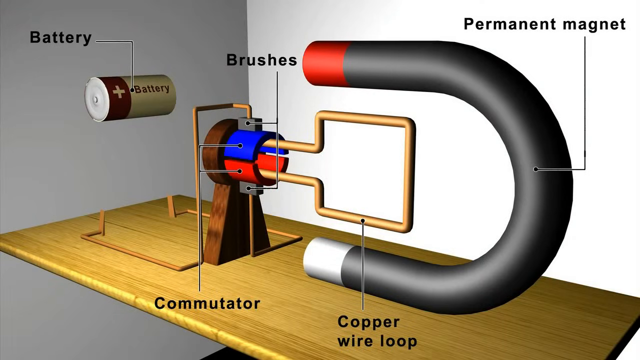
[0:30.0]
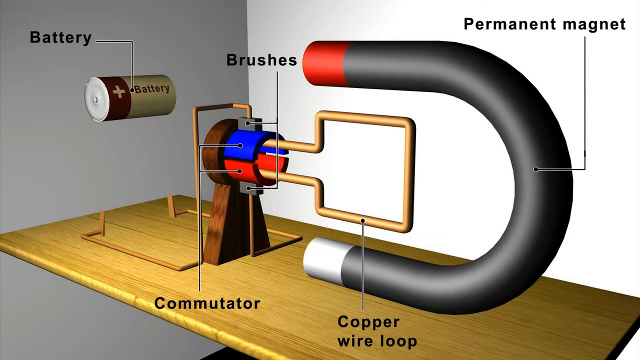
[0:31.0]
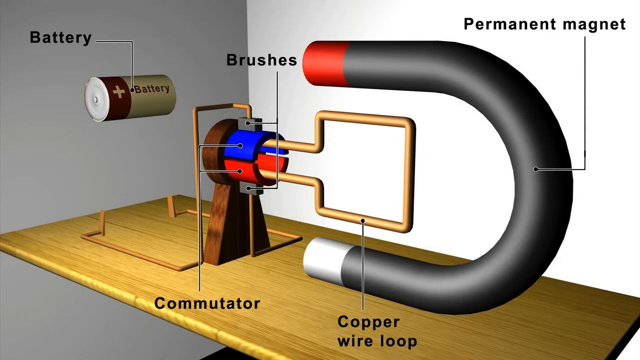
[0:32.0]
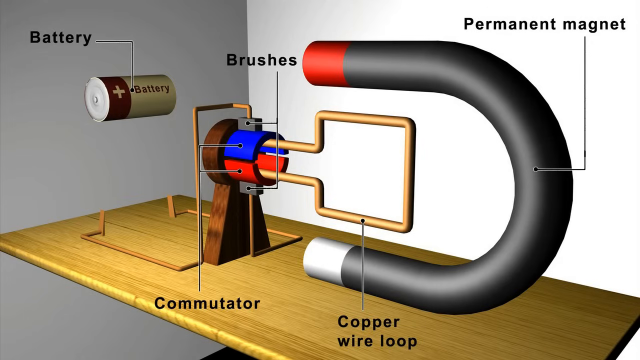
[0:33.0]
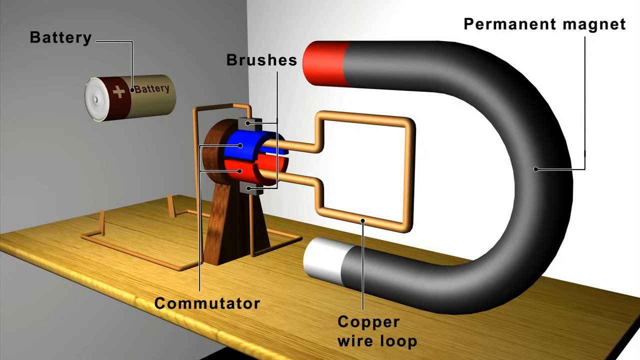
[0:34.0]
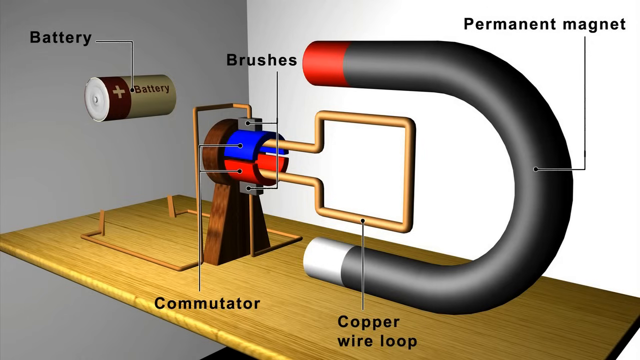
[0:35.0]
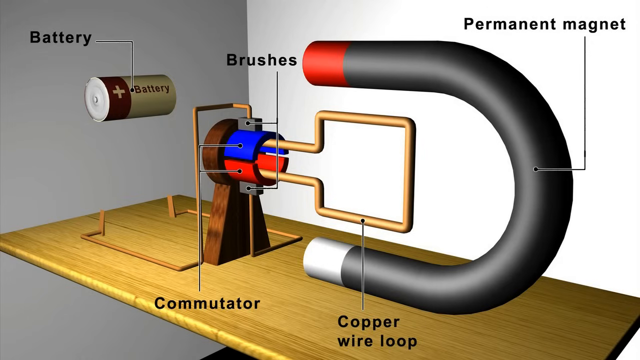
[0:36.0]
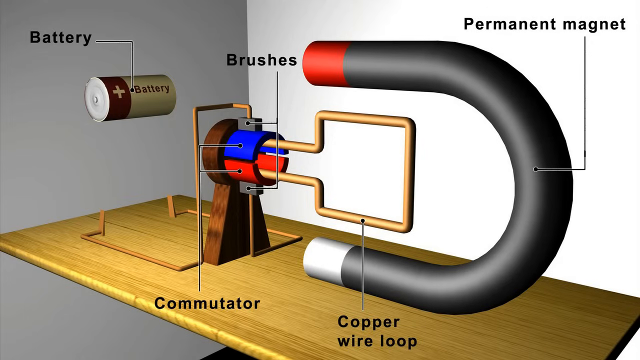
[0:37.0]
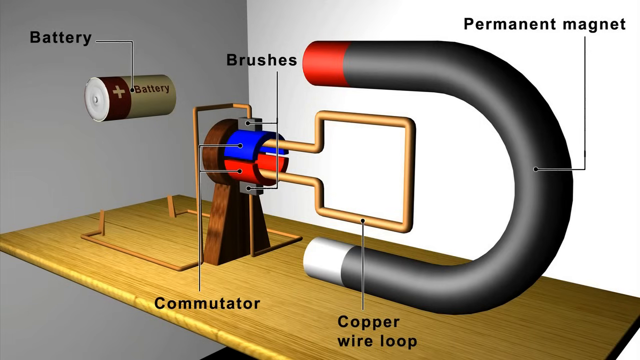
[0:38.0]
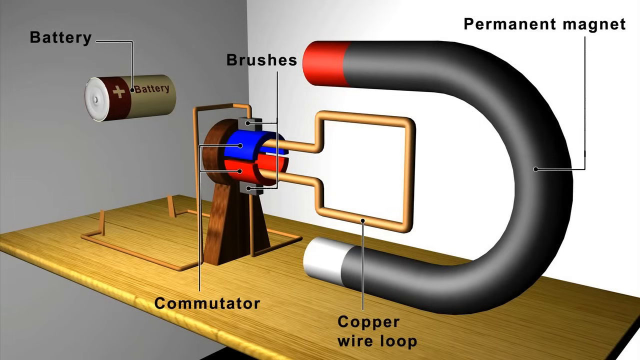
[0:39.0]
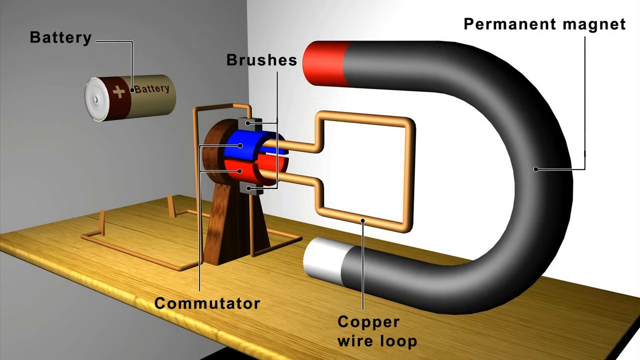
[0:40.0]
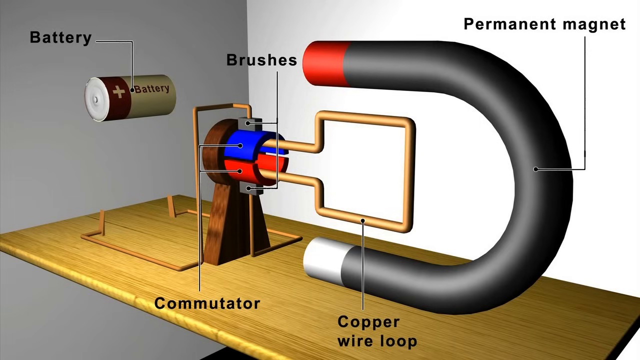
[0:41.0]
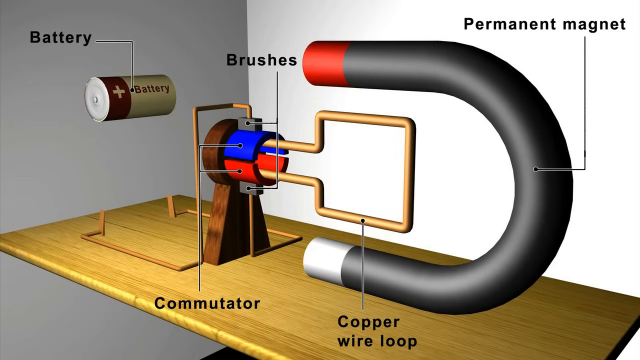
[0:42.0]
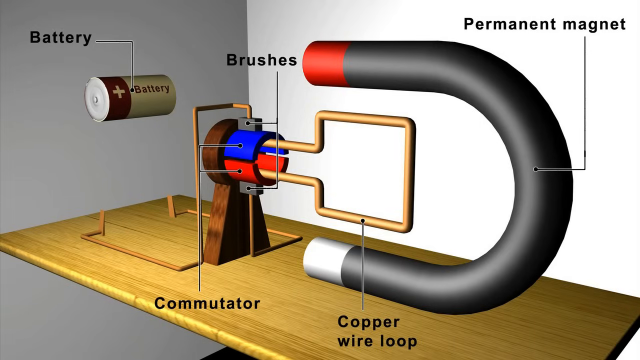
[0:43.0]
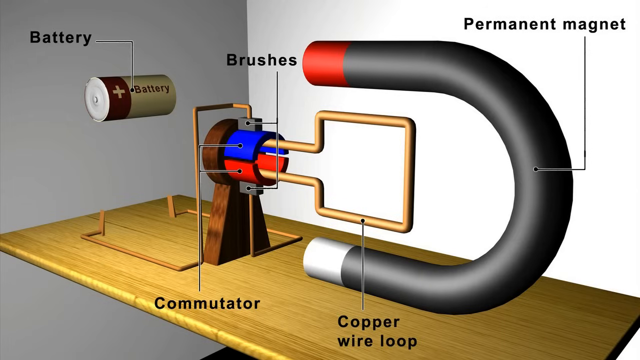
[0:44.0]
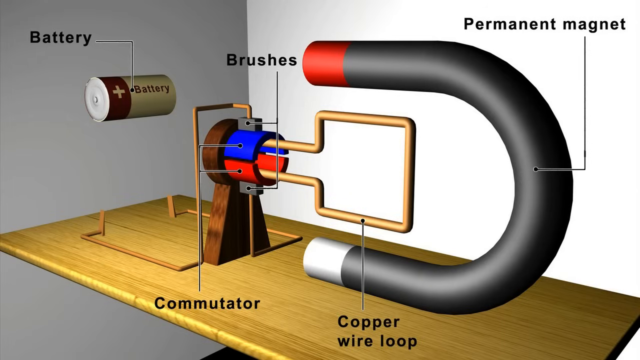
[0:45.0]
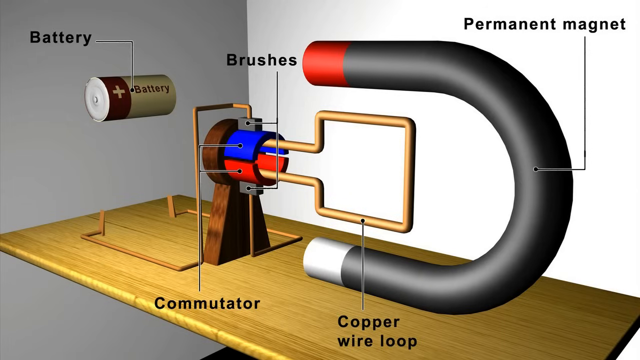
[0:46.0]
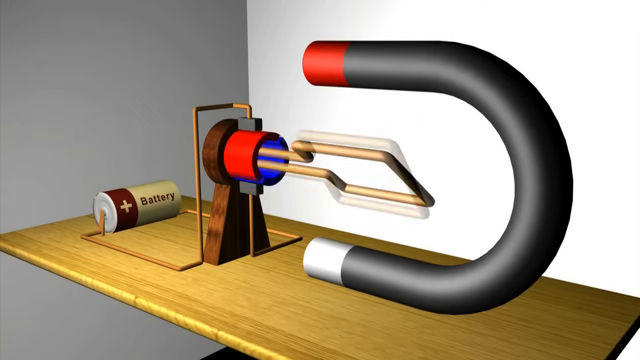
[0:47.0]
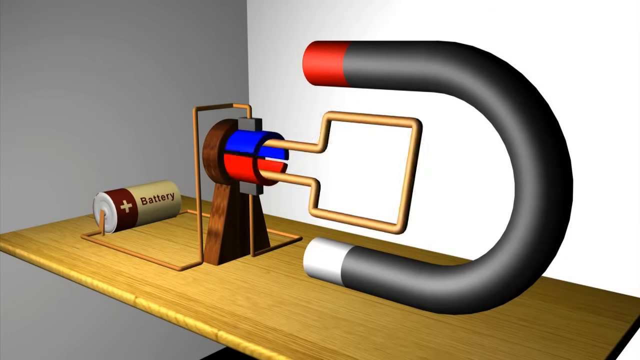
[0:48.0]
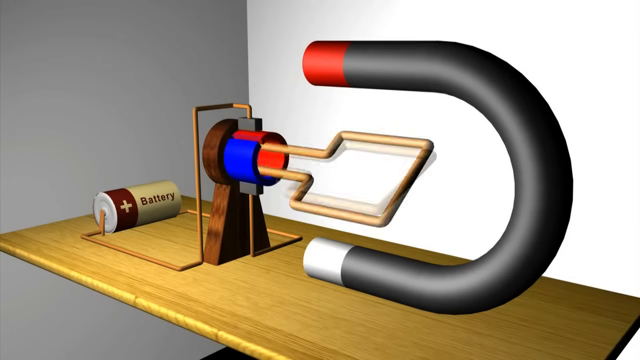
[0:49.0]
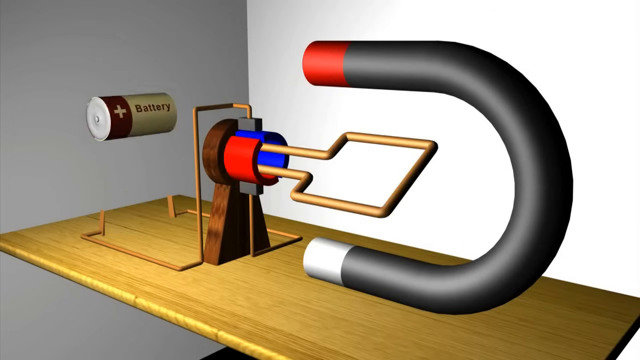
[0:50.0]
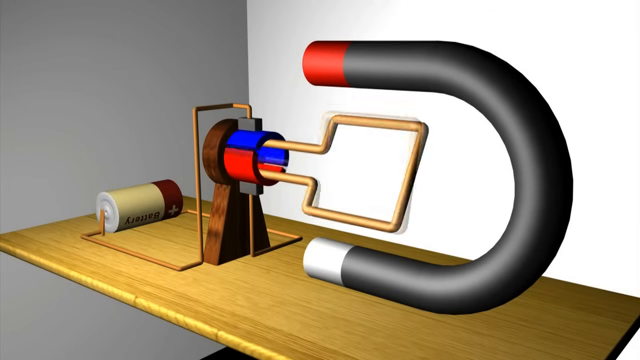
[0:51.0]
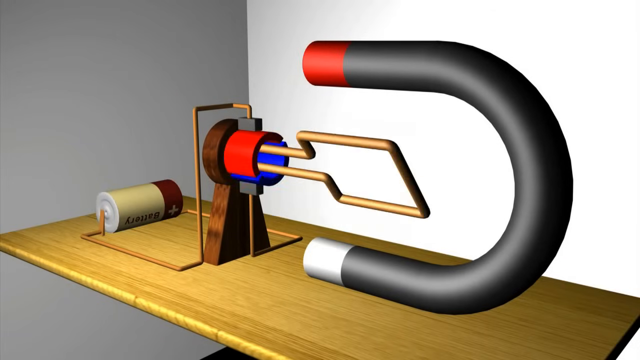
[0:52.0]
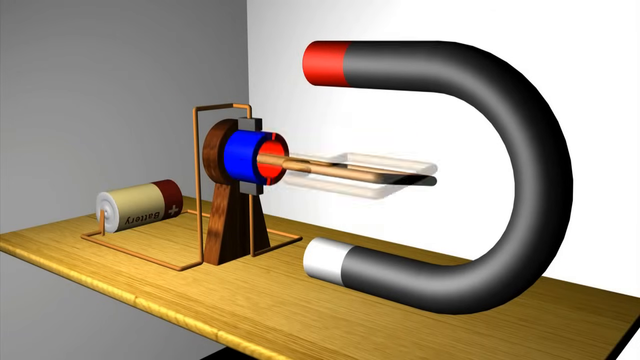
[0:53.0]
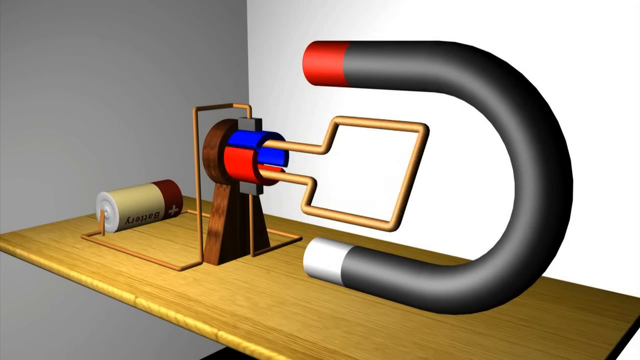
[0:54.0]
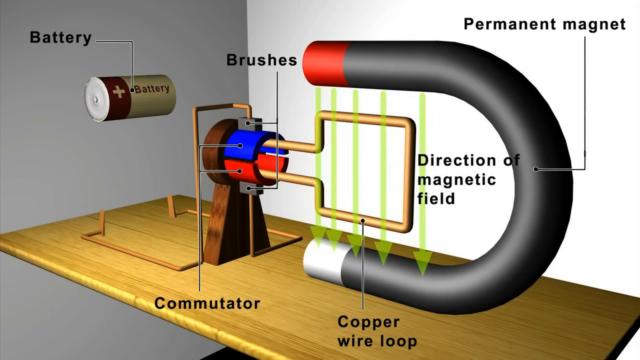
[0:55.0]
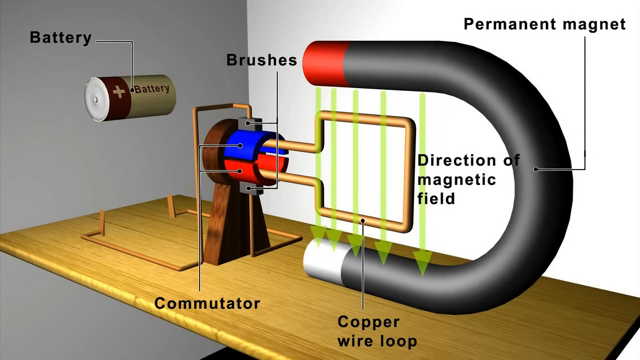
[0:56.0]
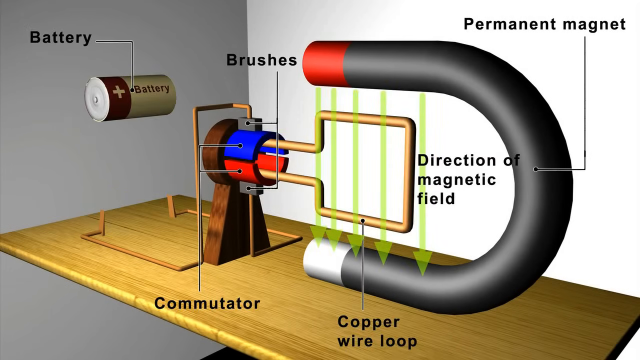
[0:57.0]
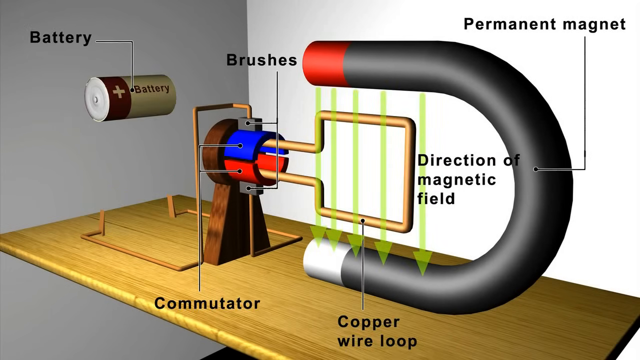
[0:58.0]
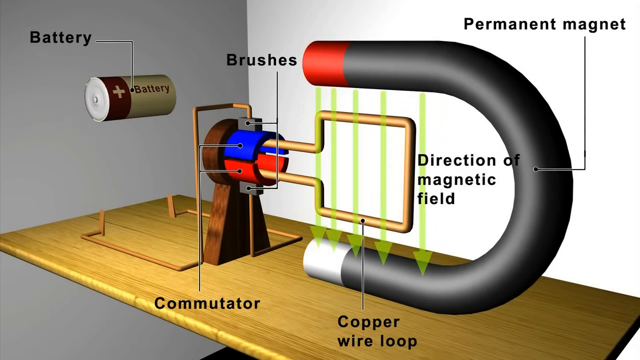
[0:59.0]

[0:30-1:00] The diagram stays in the center of the screen with all the parts forming the device. About halfway through, the image changes to an animated version of the diagram. The battery, which was up in the air before, is now down on the wooden platform, connected to the device. The copper wire loop starts spinning, which in turn spins the commutator. It spins at a normal speed, then the battery is lifted from its place into the air, turned around so it powers the opposite direction, and placed back down onto the platform. The diagram then comes to a stop and returns to normal, with green arrows on top of the copper wire loop showing the direction of the magnetic field.